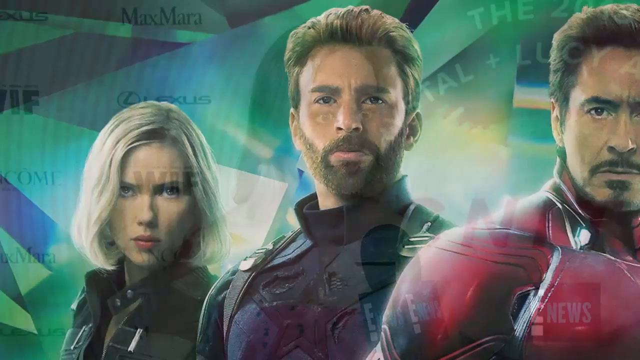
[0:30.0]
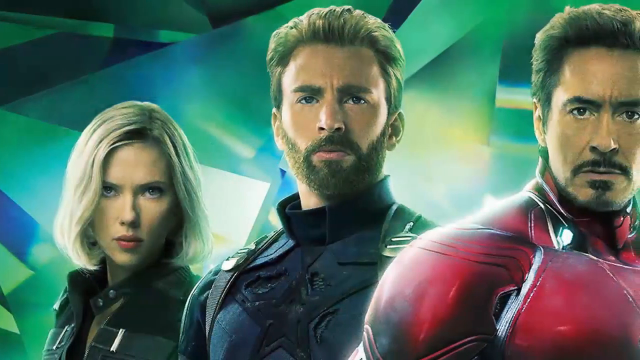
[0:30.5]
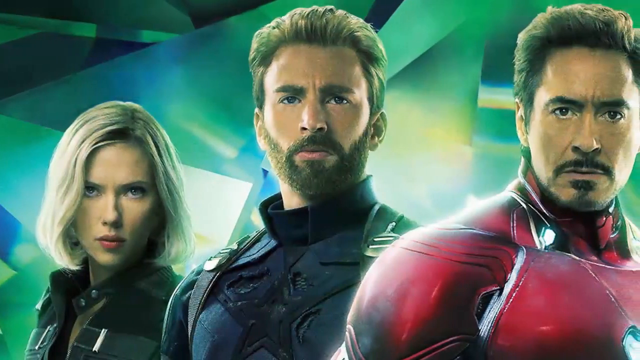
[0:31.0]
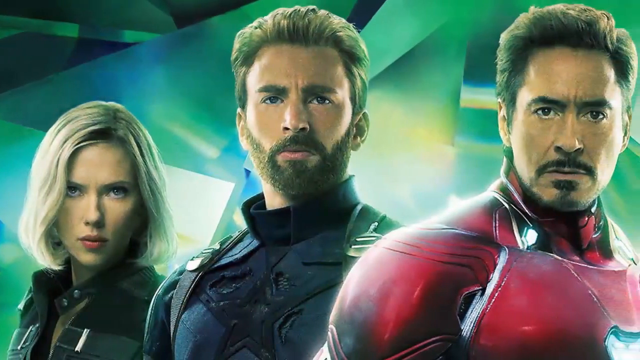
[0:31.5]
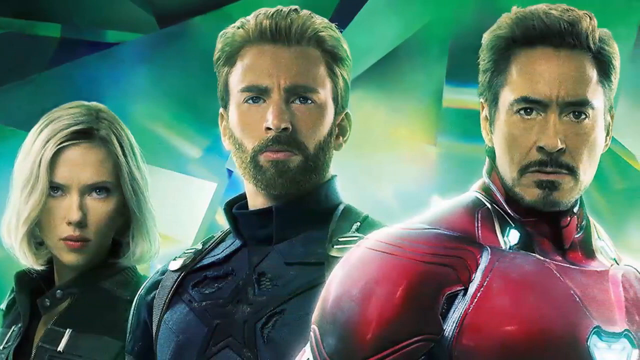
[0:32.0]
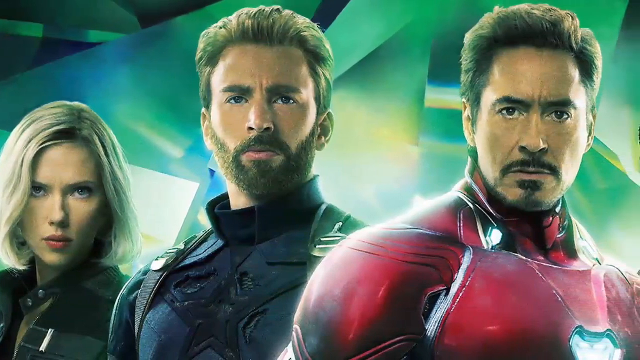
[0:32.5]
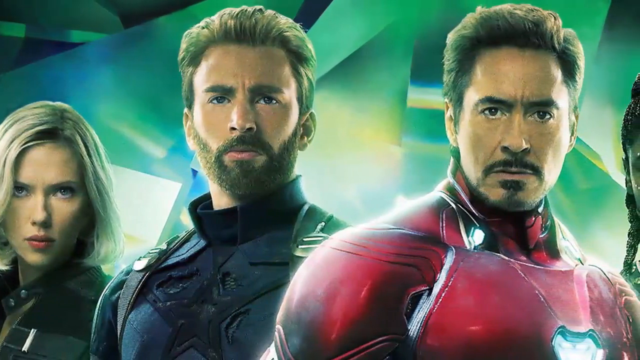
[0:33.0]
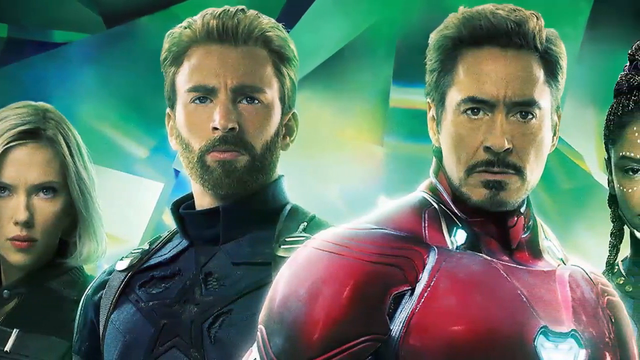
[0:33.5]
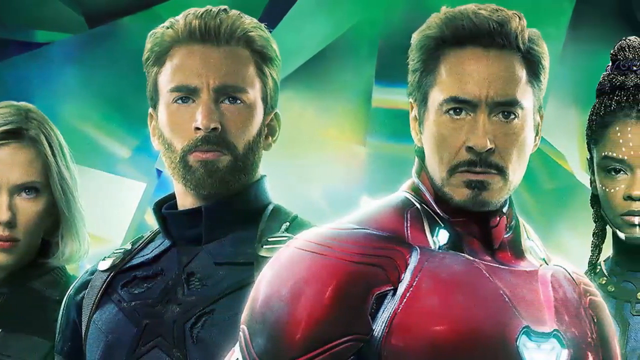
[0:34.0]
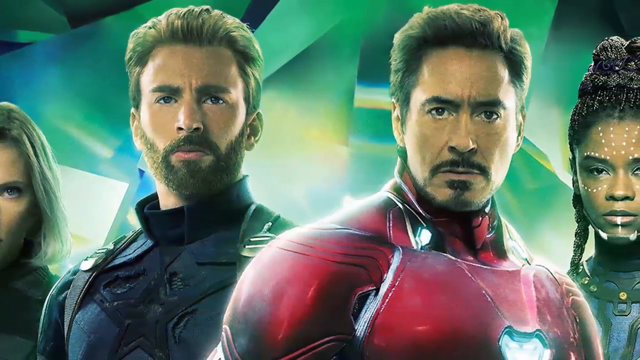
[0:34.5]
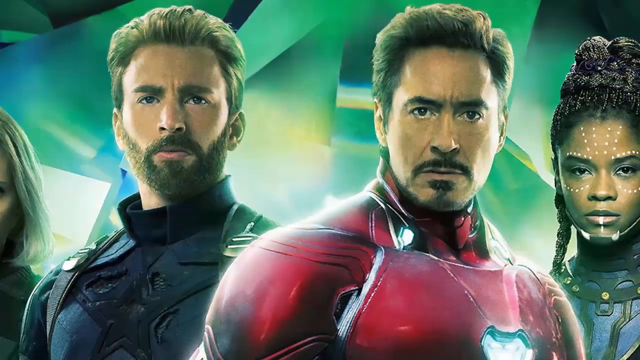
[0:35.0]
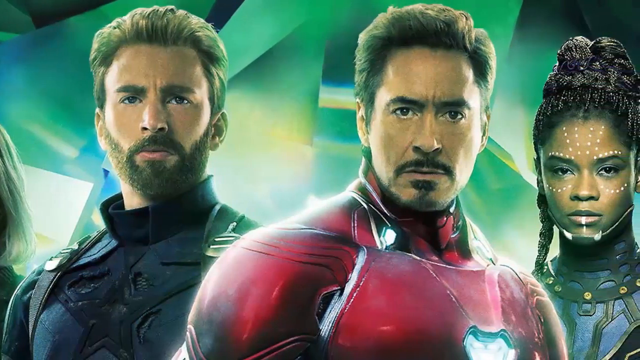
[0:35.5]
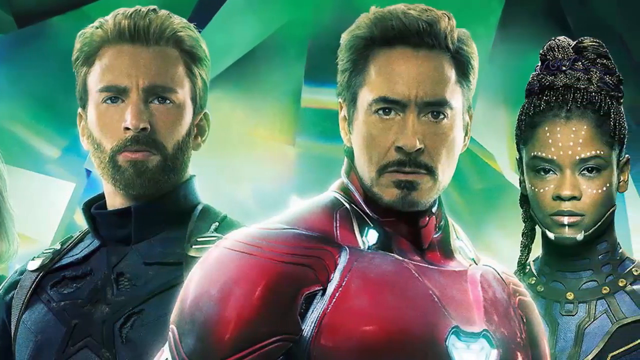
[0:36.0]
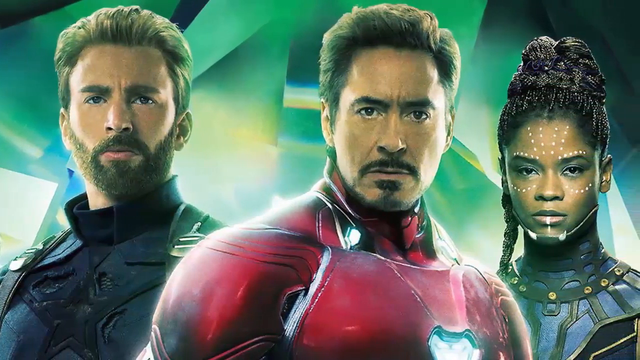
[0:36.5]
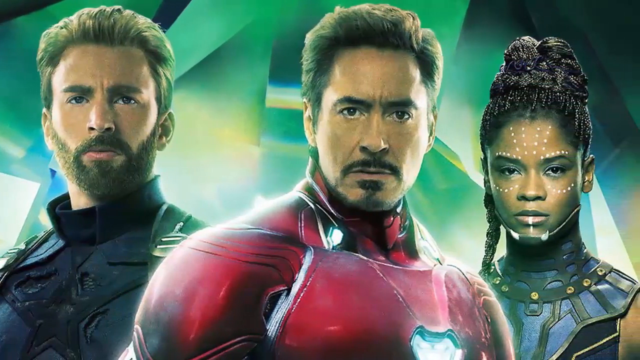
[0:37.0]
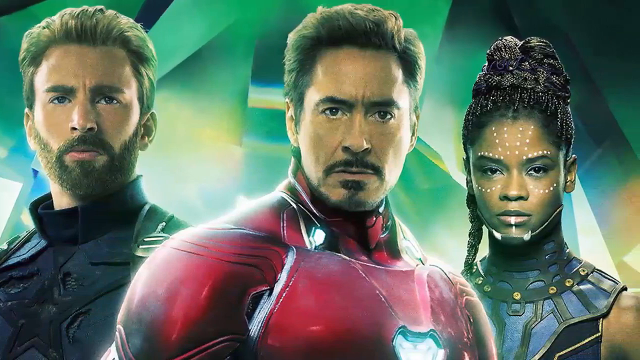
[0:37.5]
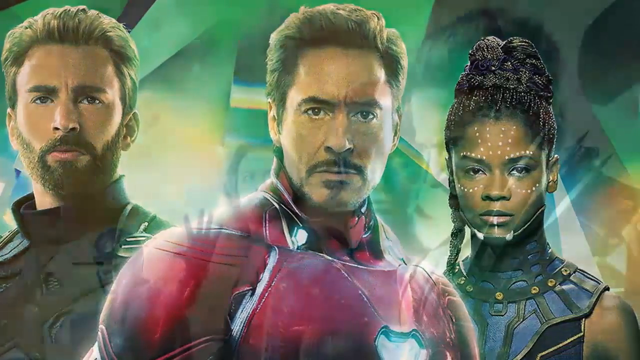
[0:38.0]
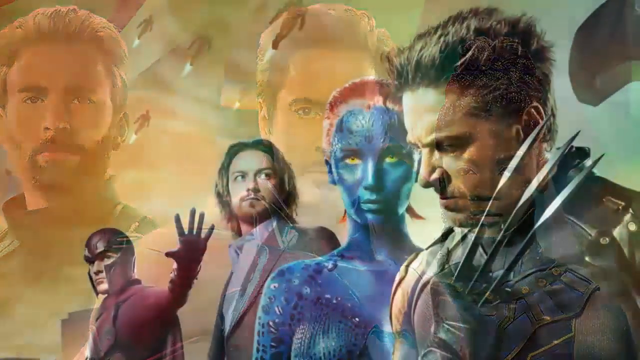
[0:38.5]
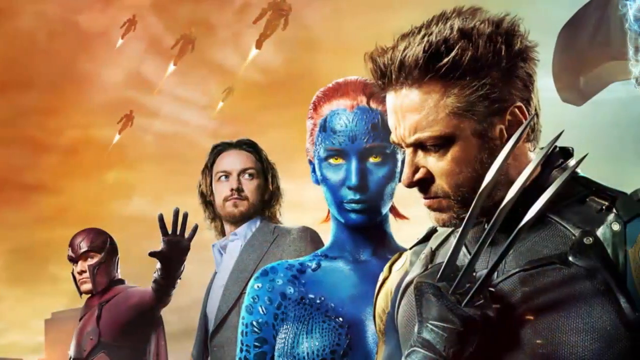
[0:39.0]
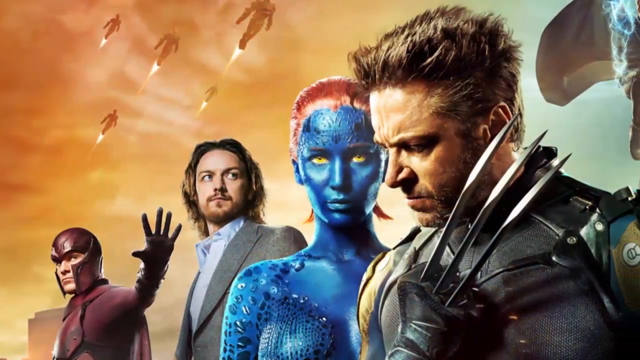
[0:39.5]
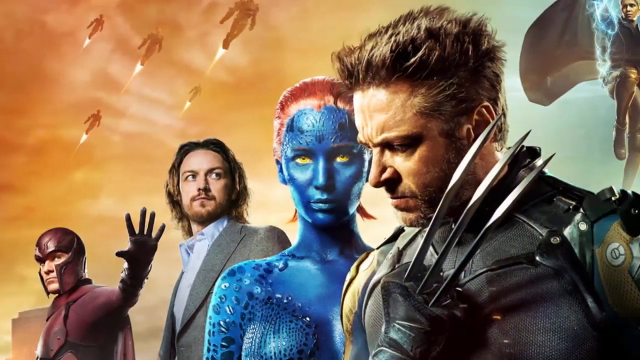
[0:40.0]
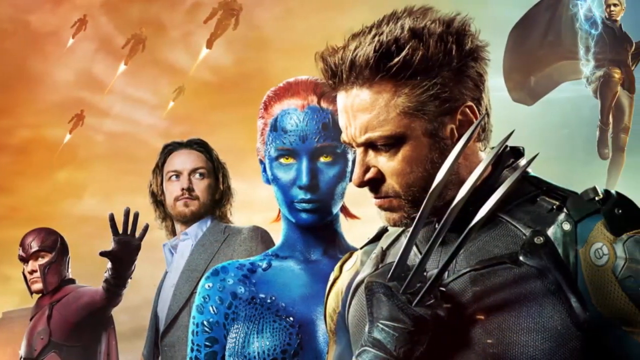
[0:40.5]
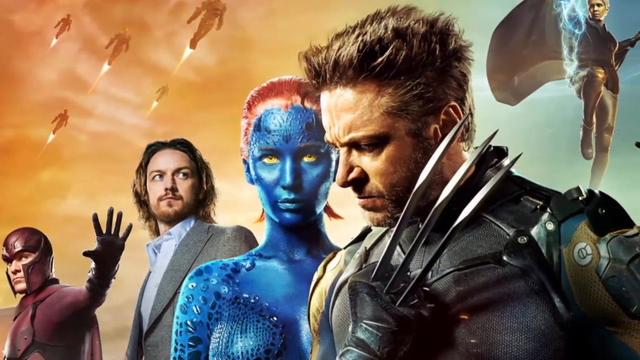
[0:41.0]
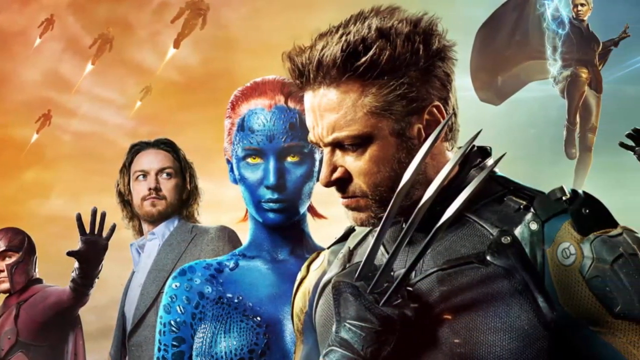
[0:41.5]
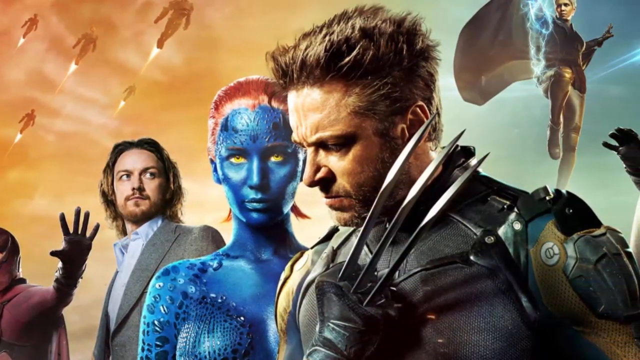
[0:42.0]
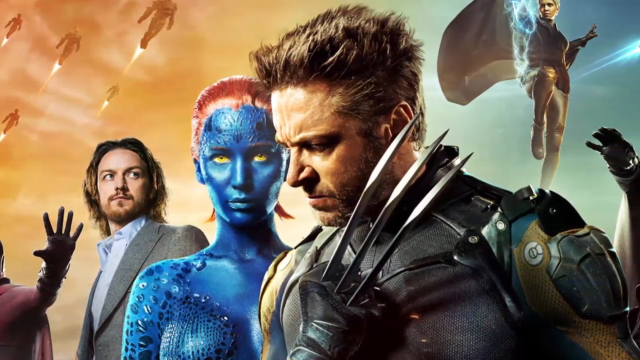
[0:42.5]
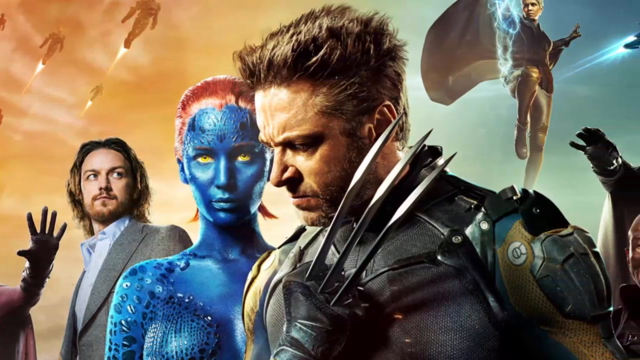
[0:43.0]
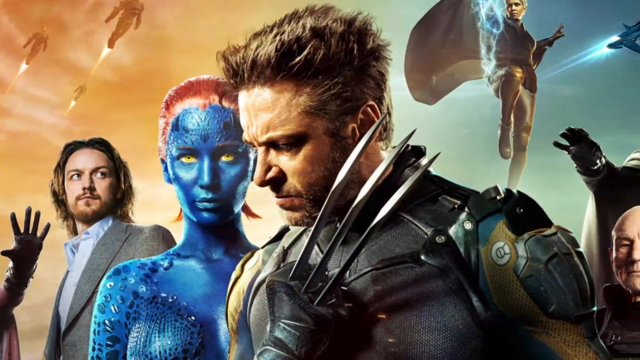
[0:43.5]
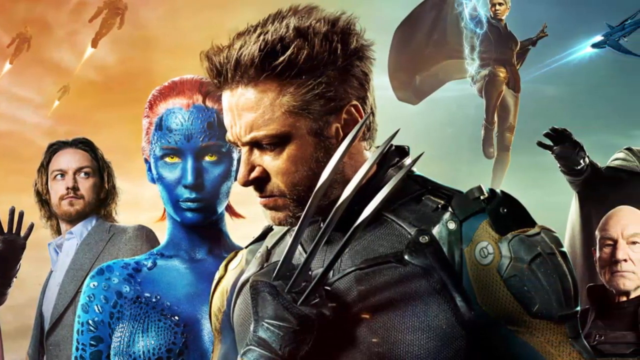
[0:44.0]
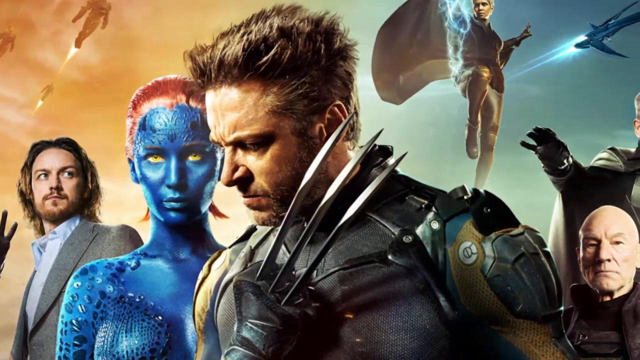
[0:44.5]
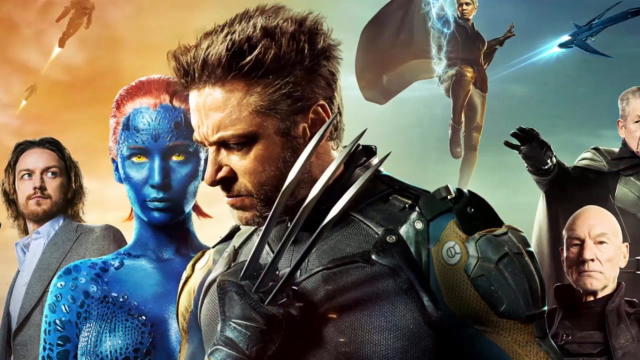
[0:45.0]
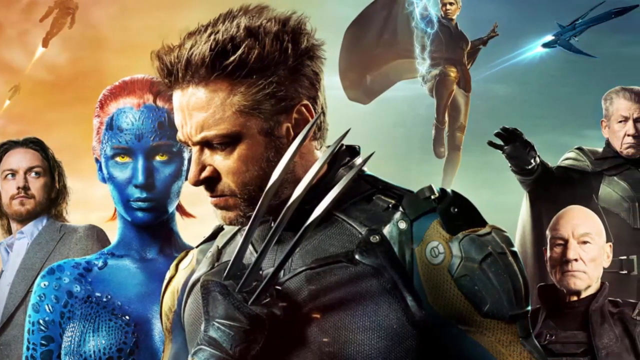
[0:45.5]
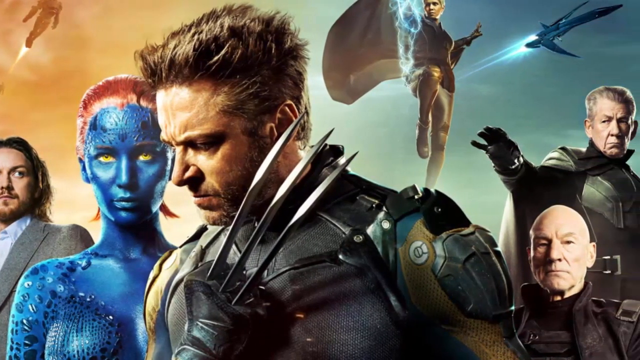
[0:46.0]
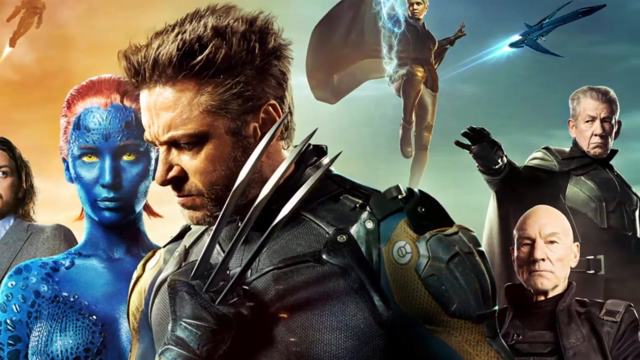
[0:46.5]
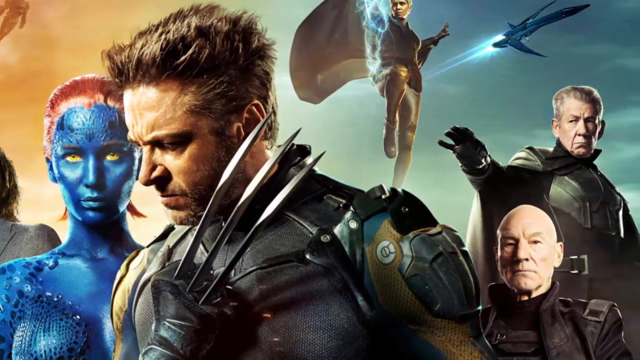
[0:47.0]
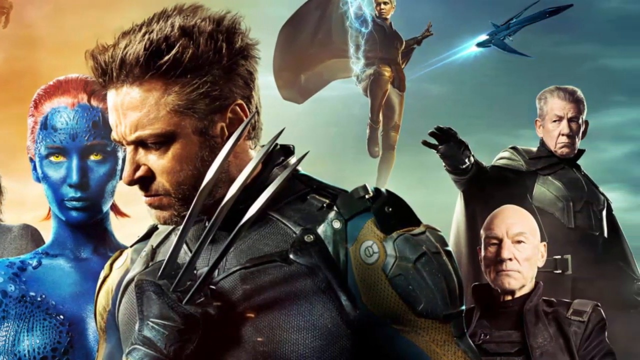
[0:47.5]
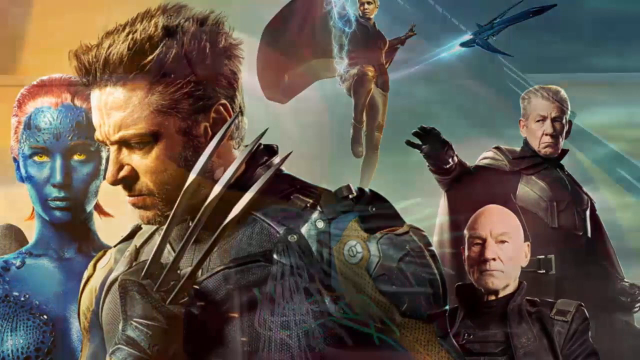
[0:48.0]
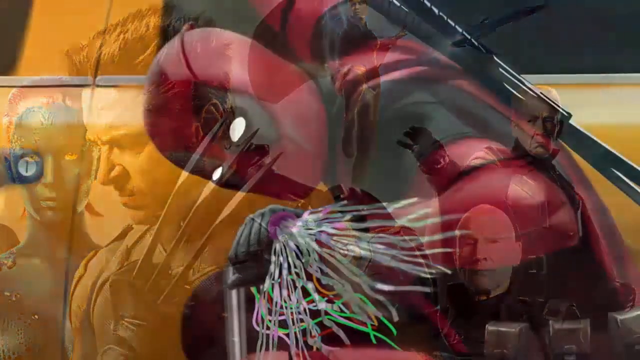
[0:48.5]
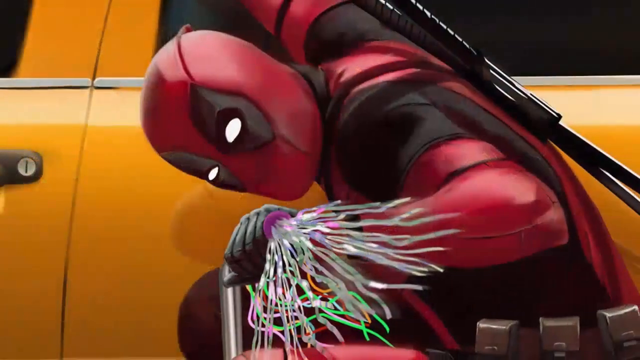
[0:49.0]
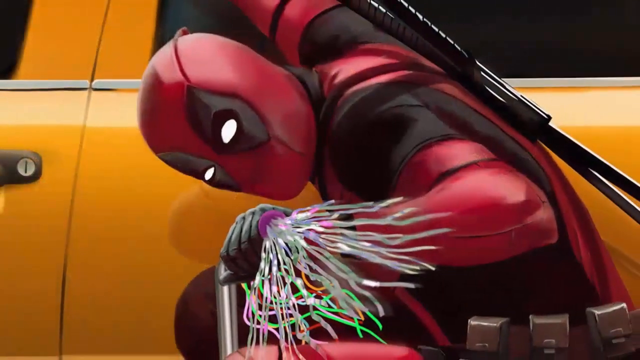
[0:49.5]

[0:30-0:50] Three actors appear on screen, seemingly Captain America, Iron Man and Scarlett Johansson as an unidentified character, all wearing their superhero uniforms. The background appears to have variations of colors, such as greens, with geometric shapes and some bright white and yellow. Another, unidentified superhero is also present. The video moves to another image of superheroes, with Wolverine and the blue character played by Halle Berry. Several superheroes are then shown flying in a very orange sky that grades to a bluish color on the right. Even more superheroes follow, and then a scene shows Deadpool next to a cab, holding a hot wire.